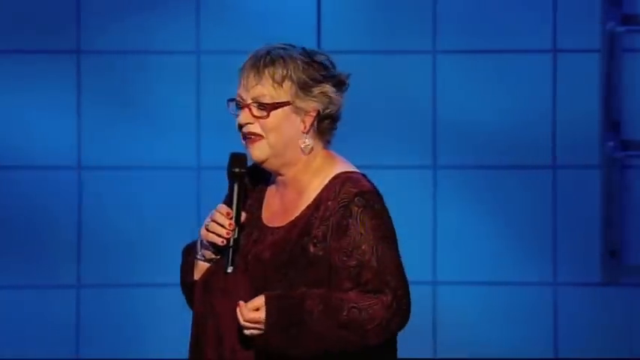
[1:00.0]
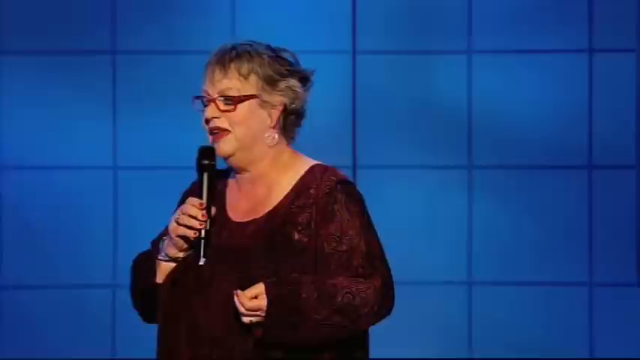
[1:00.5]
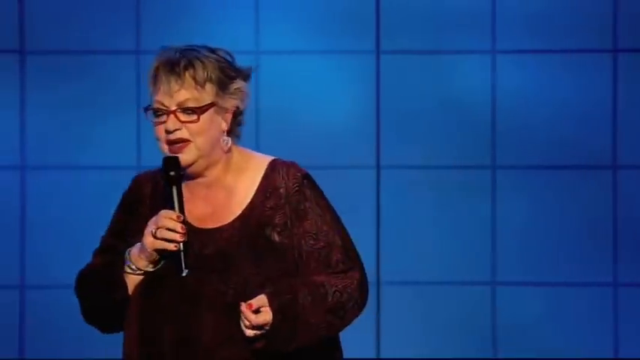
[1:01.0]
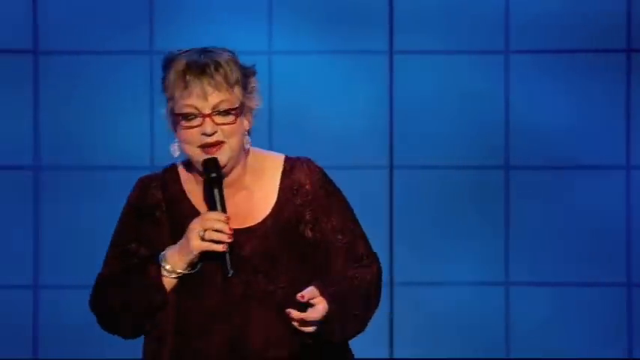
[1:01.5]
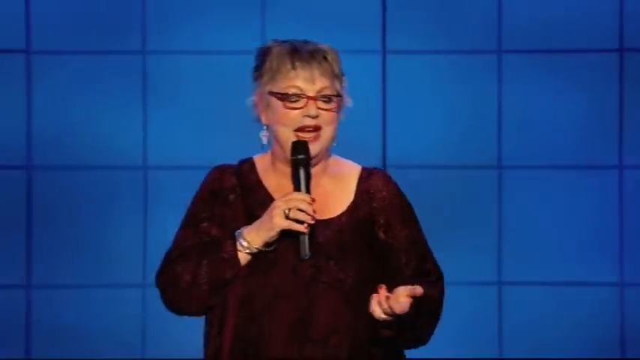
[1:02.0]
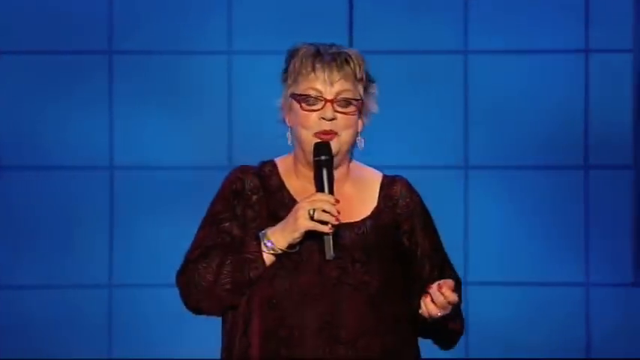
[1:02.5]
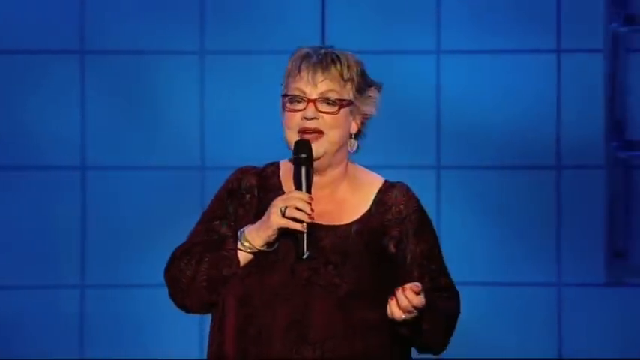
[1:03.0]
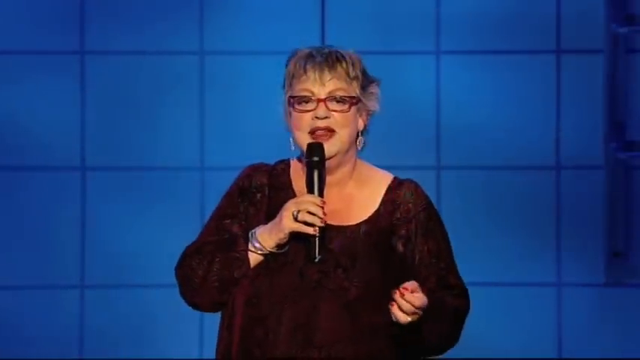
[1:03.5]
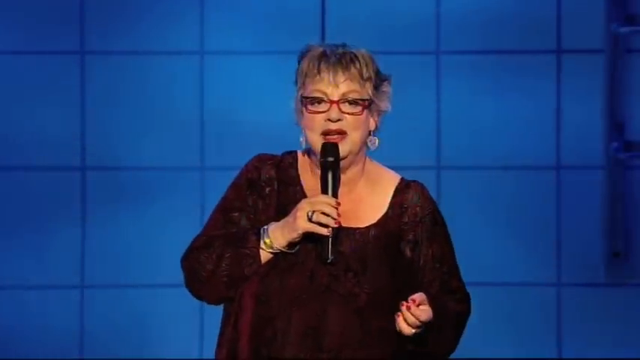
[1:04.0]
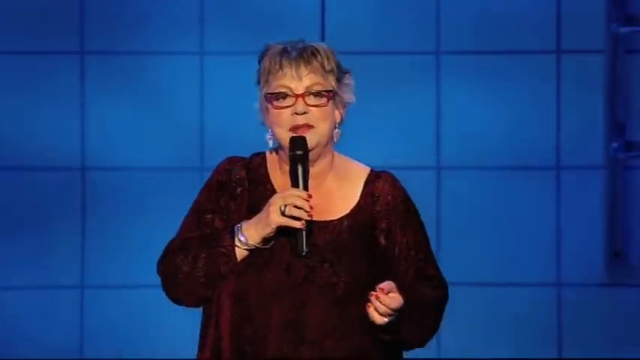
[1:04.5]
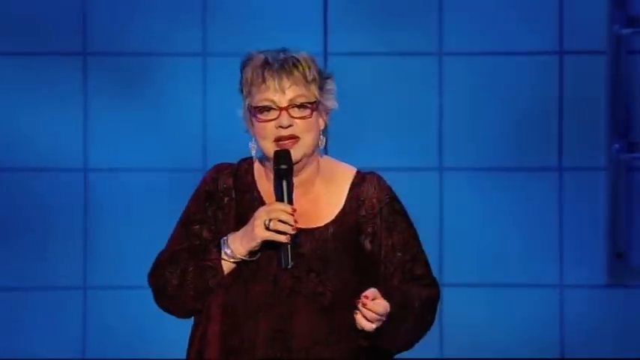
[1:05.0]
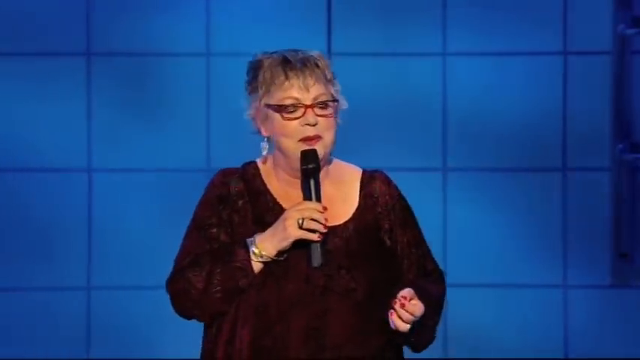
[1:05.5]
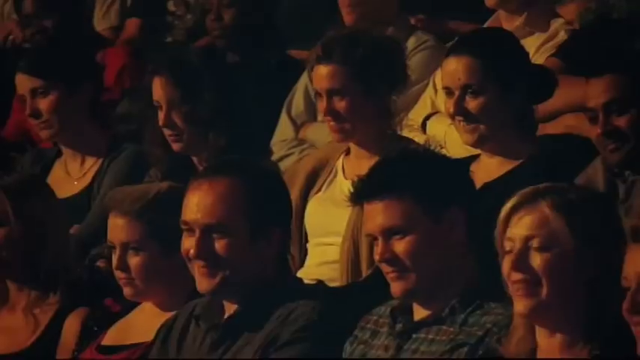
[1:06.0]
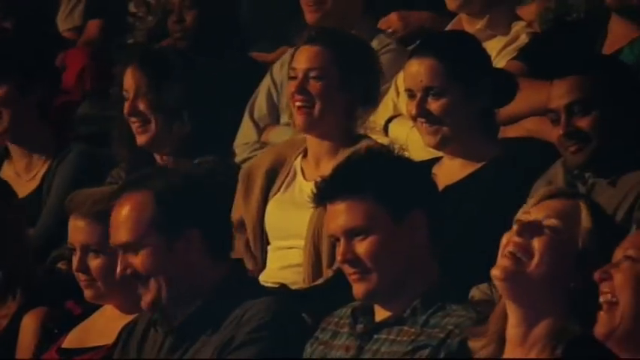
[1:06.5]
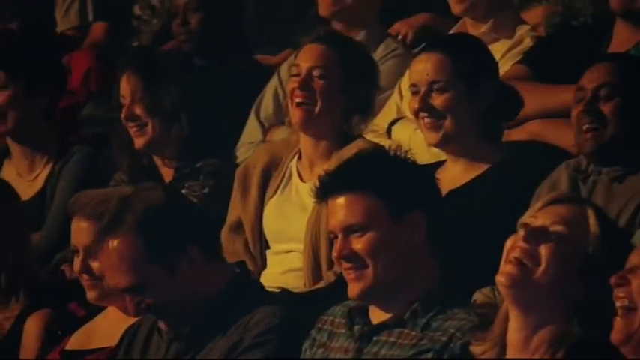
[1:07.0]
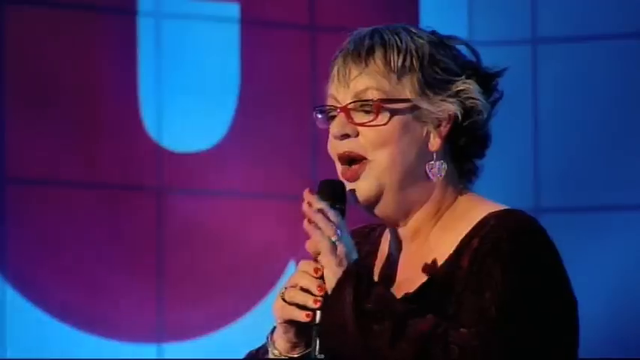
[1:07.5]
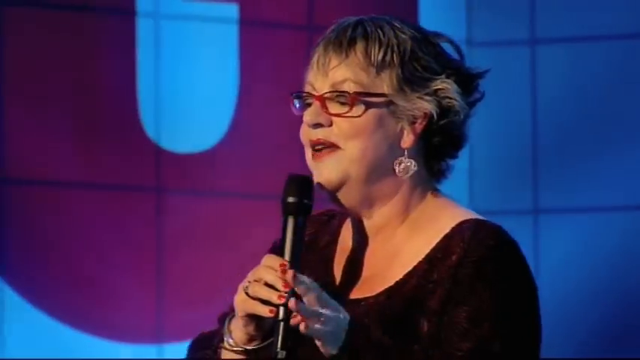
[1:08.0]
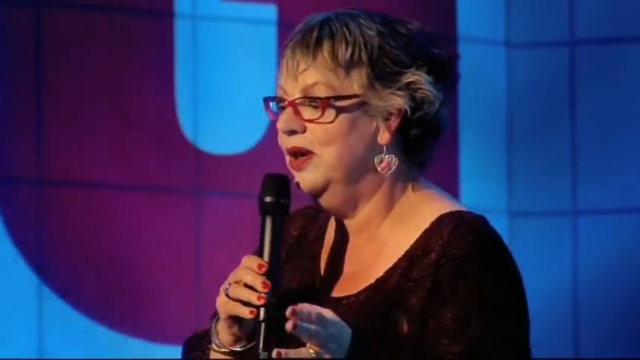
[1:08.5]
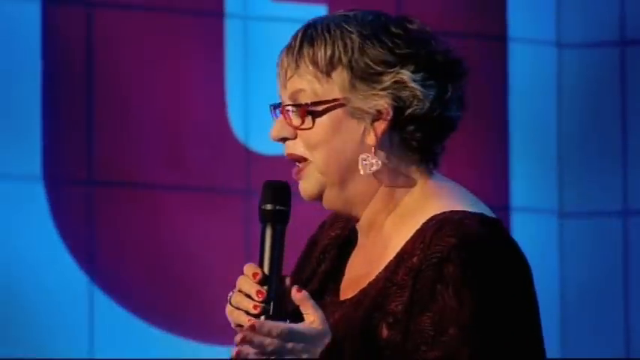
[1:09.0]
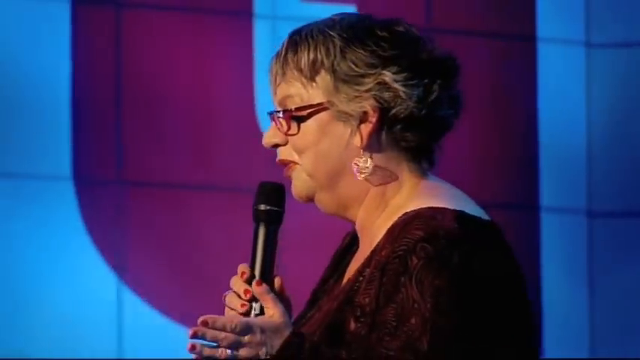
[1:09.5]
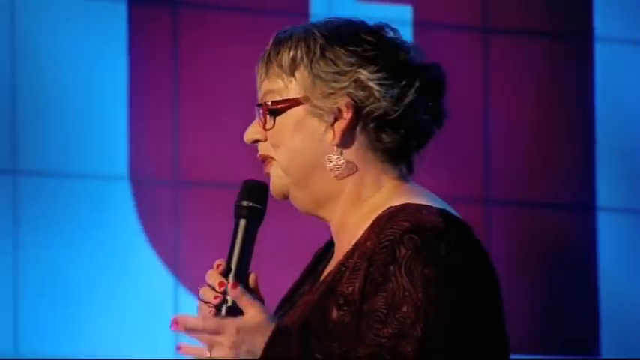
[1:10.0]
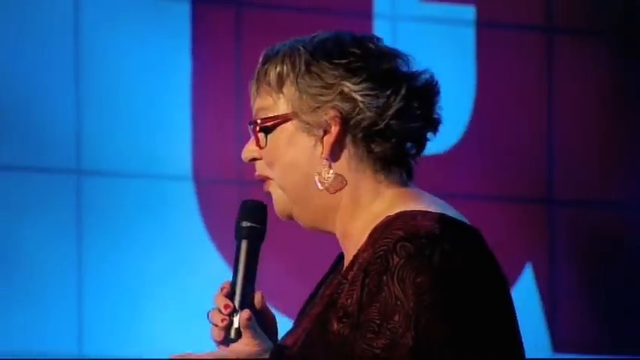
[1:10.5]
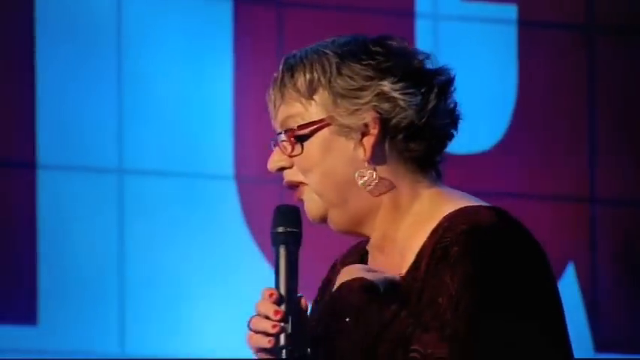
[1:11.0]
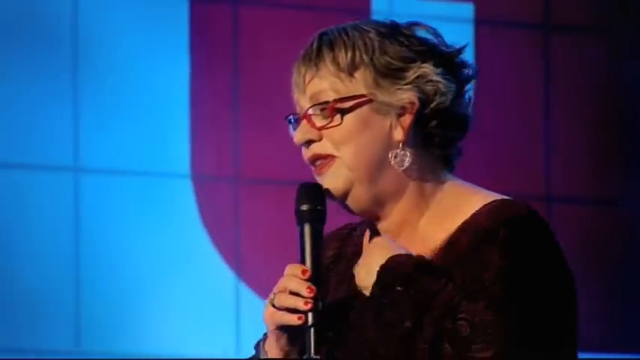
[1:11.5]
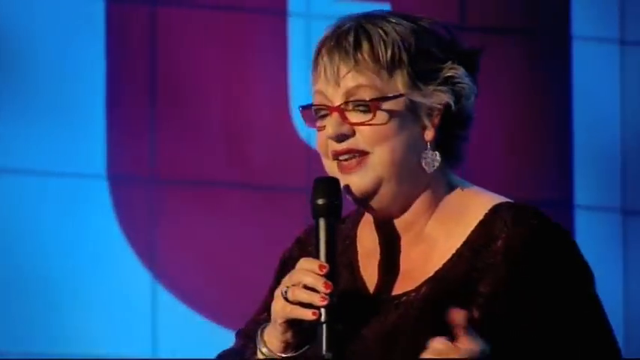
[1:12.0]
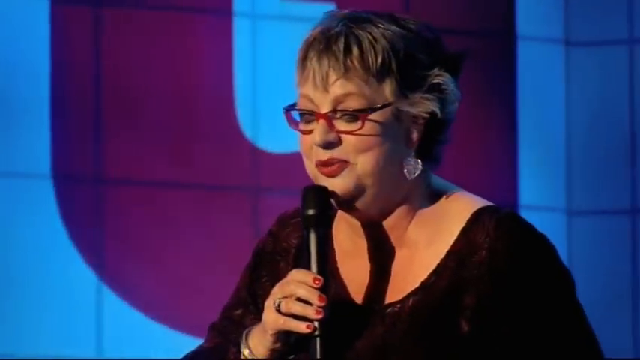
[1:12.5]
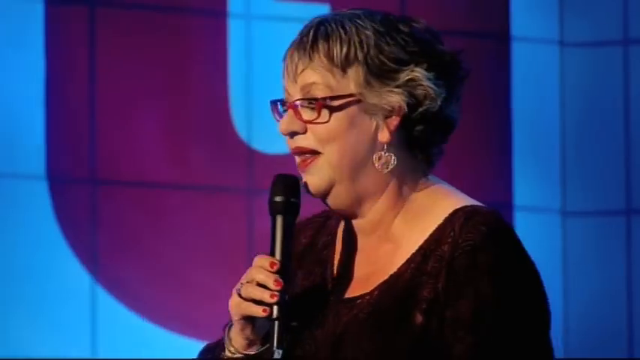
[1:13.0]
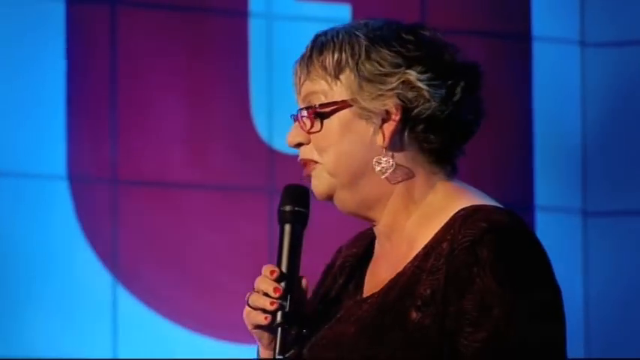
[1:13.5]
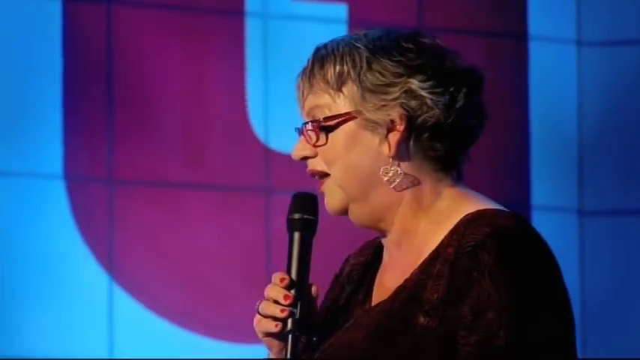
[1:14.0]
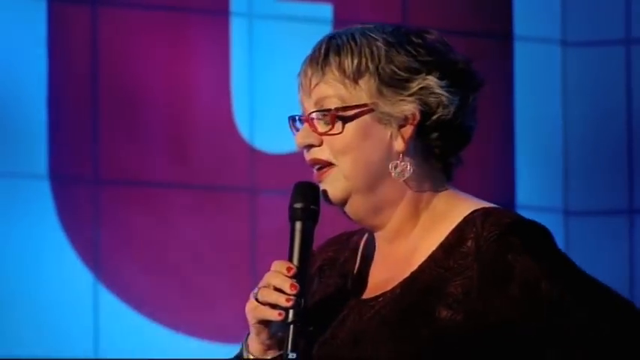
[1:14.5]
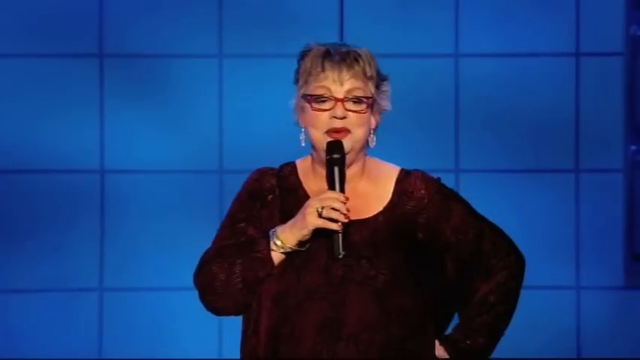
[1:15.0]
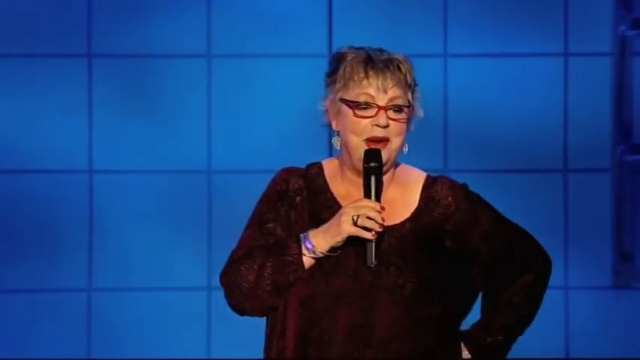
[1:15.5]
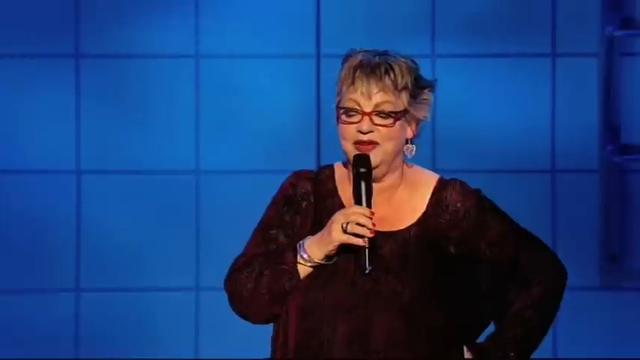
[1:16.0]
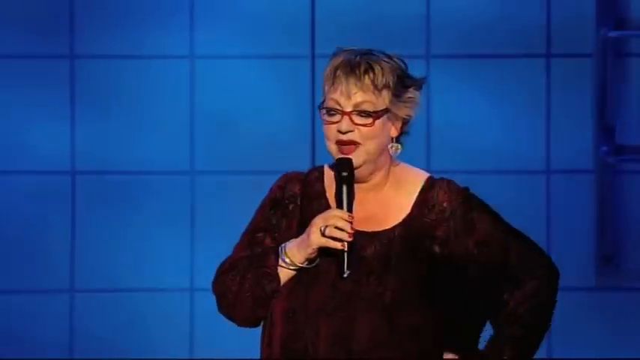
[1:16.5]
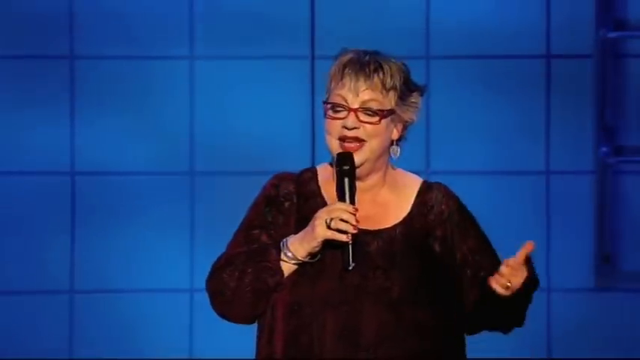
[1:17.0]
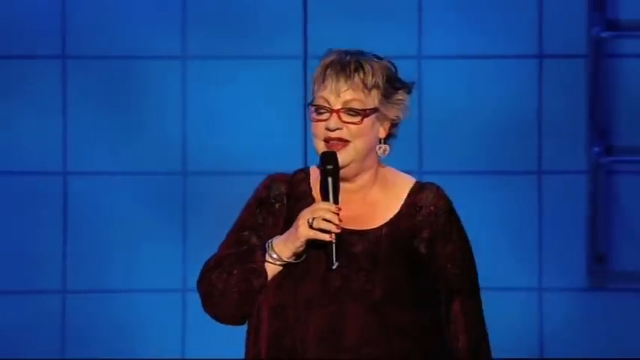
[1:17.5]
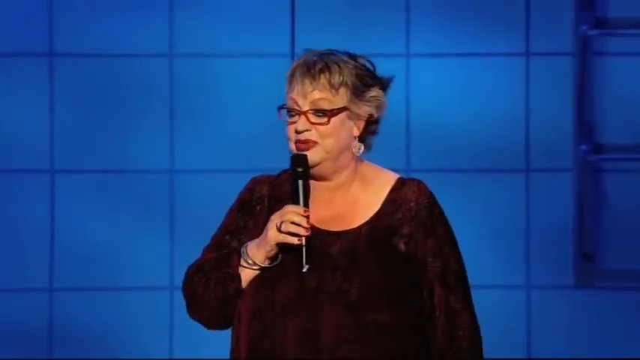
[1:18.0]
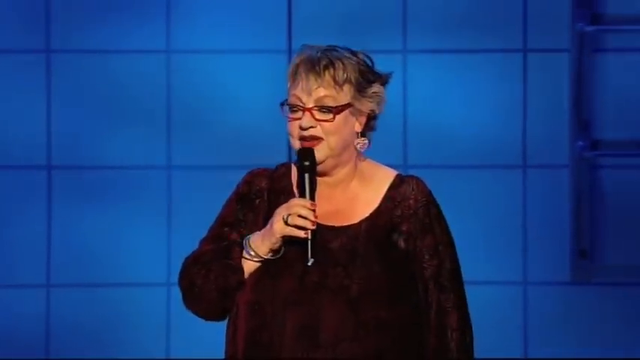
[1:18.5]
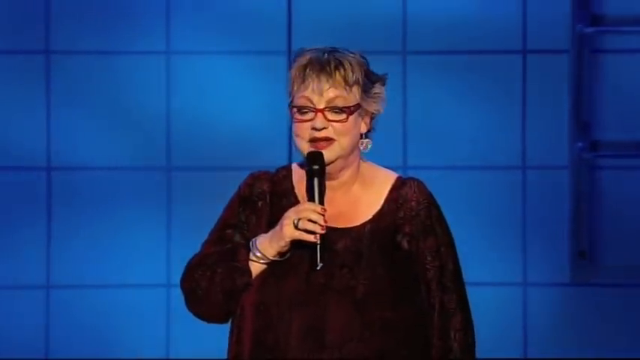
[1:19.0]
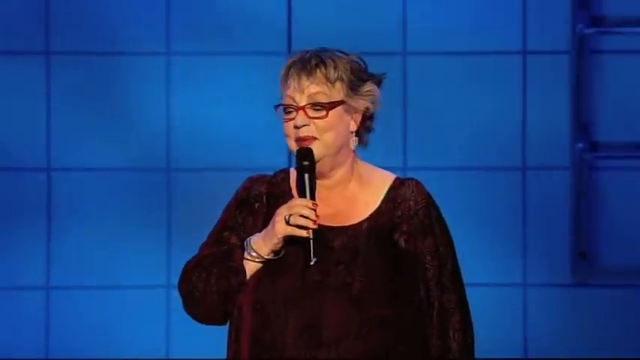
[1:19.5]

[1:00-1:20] The woman wears silver bangles, a ring on the ring finger of her left hand, hoop earrings, spectacles with a bold red frame and red lipstick. She is dressed in a purple dress with black pants and black shoes. Behind her, the stage is made of blue blocks separated by darker blue lines. She talks to the audience, who are laughing; the crowd includes males and females and is mostly white. She walks around the stage and continues making jokes. Among the visible crowd members is a girl with black hair in a white top and a purple or pink cardigan, who is laughing. Next to her, a lady in a black top is also laughing.